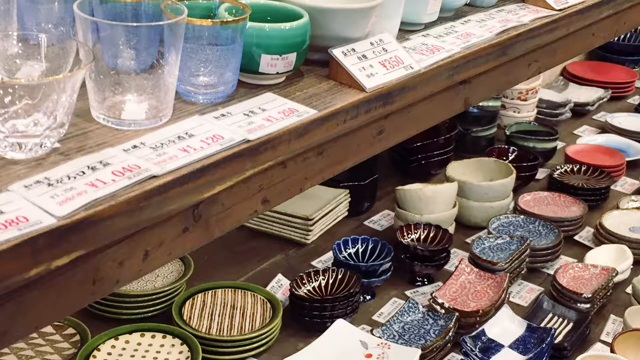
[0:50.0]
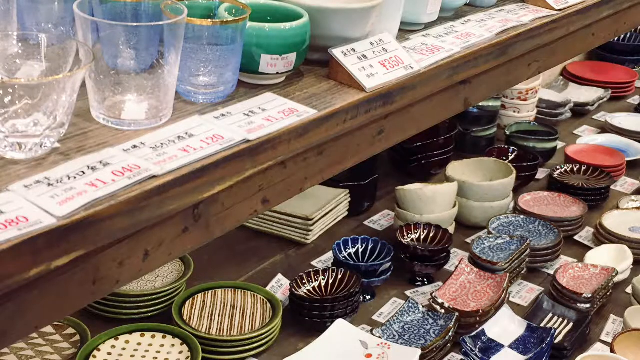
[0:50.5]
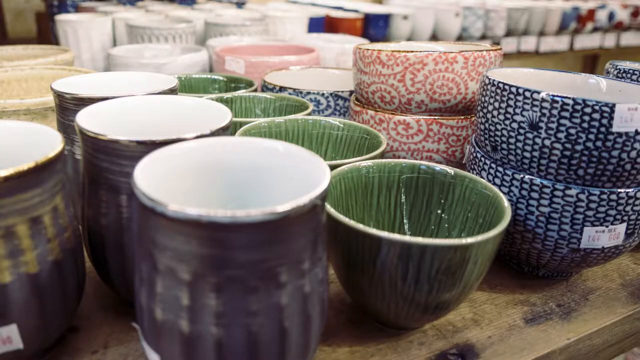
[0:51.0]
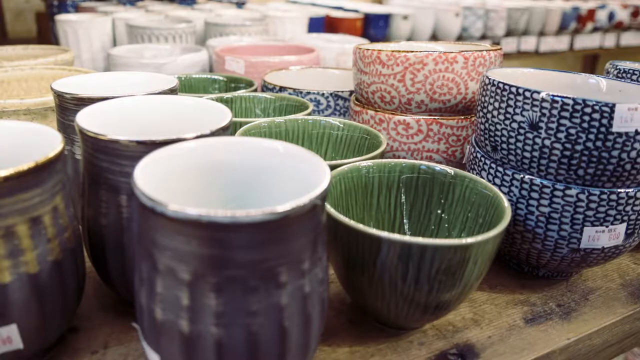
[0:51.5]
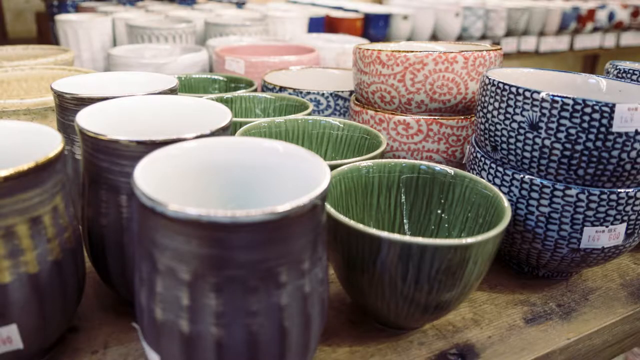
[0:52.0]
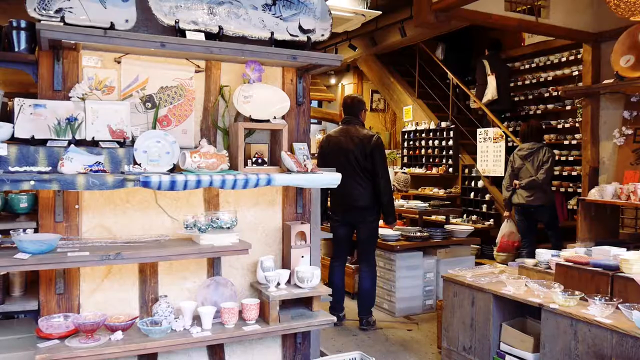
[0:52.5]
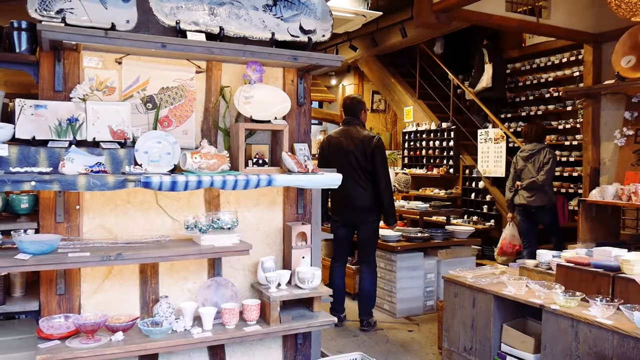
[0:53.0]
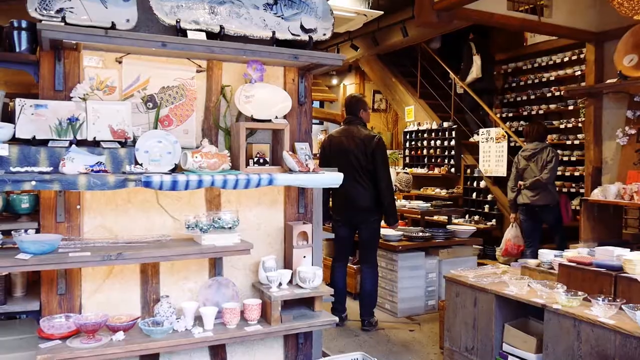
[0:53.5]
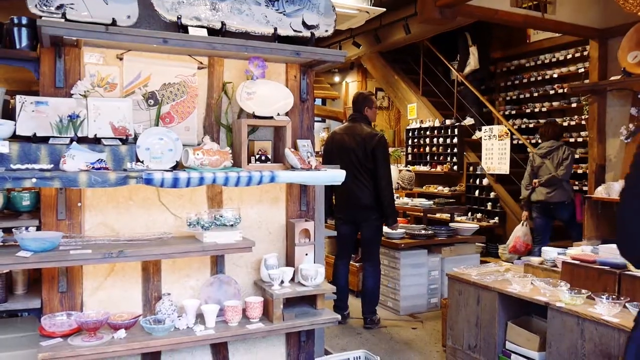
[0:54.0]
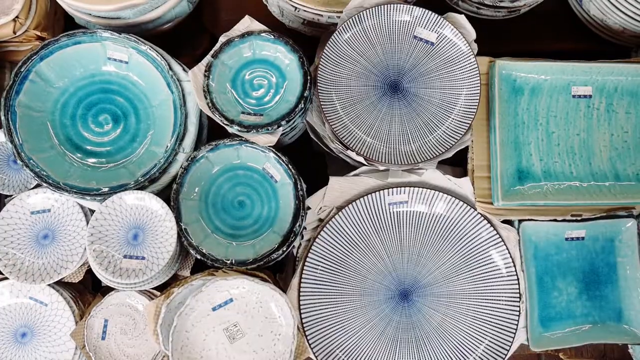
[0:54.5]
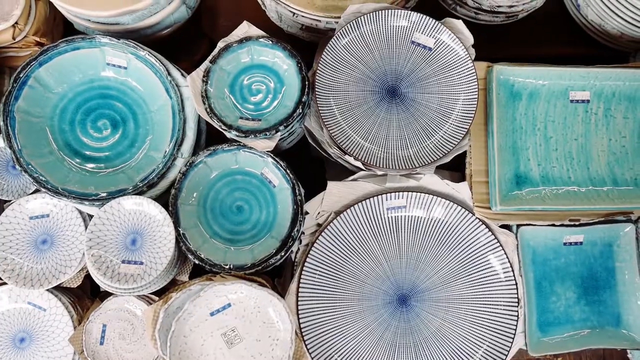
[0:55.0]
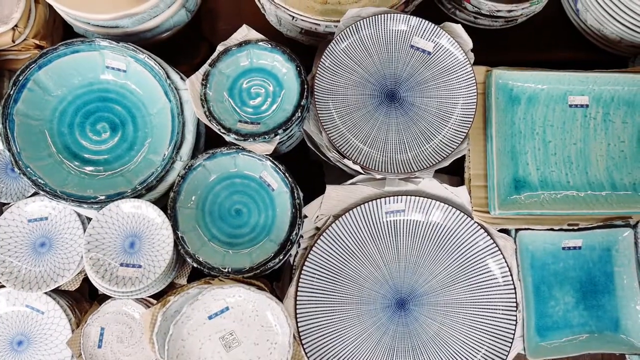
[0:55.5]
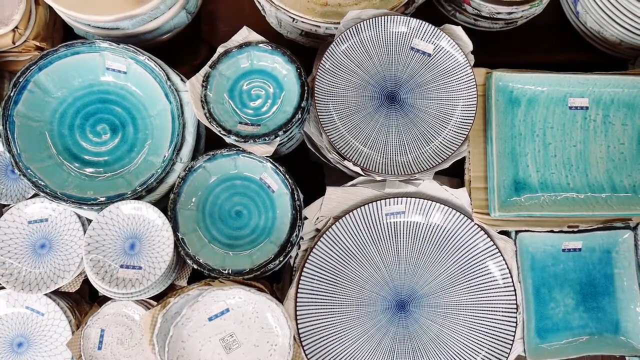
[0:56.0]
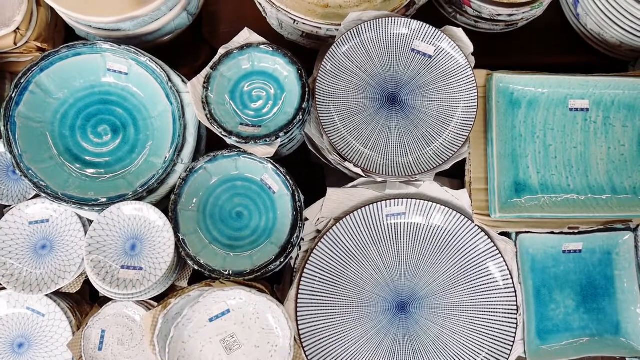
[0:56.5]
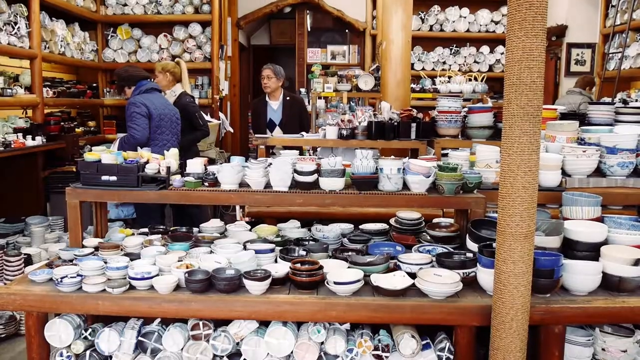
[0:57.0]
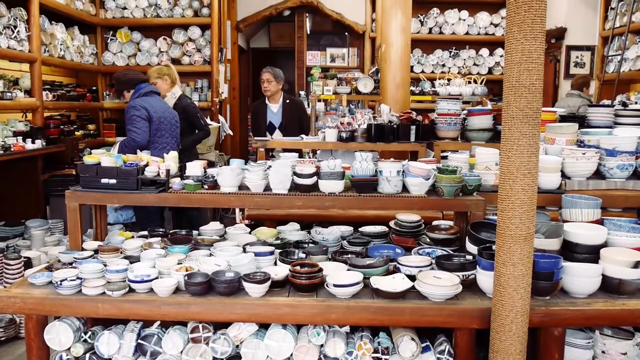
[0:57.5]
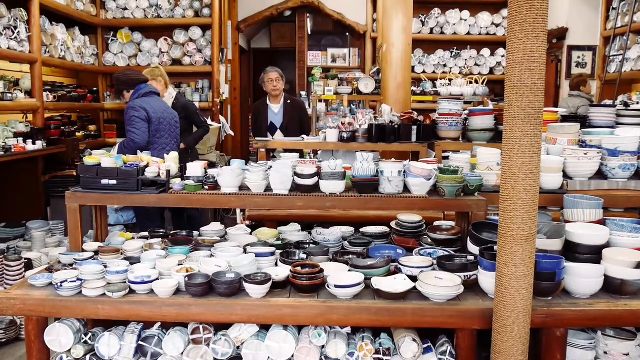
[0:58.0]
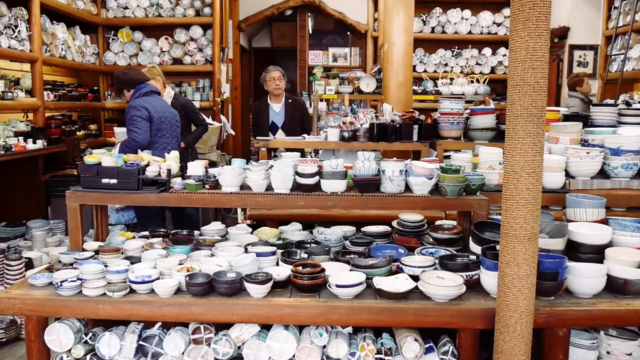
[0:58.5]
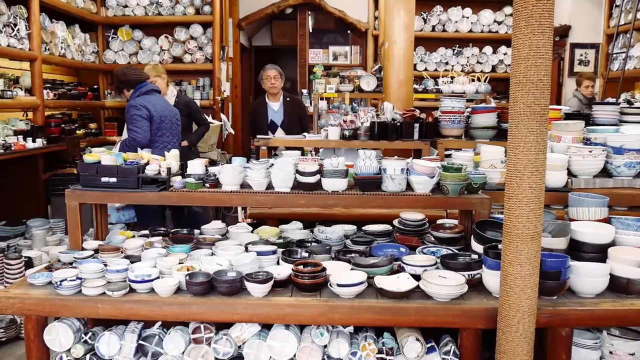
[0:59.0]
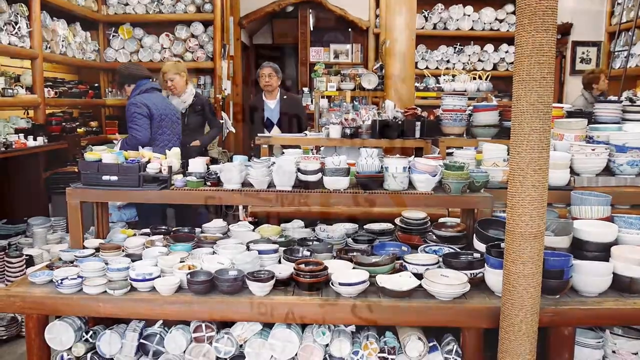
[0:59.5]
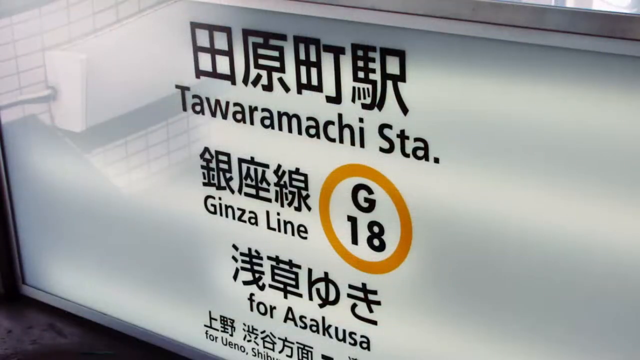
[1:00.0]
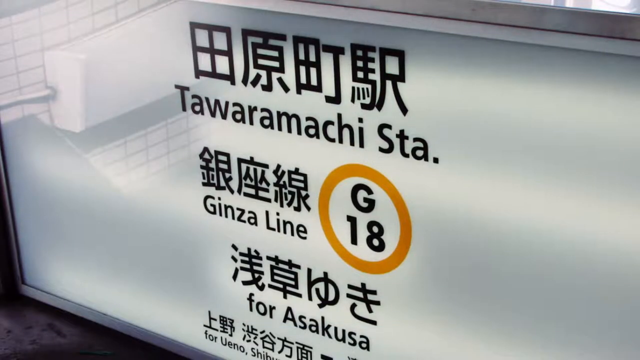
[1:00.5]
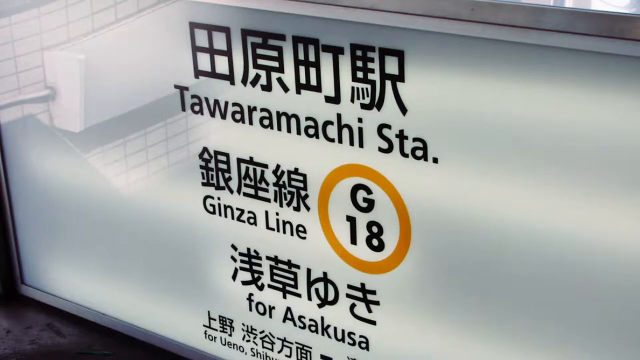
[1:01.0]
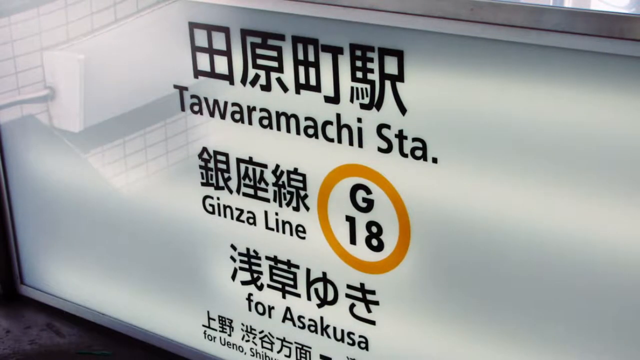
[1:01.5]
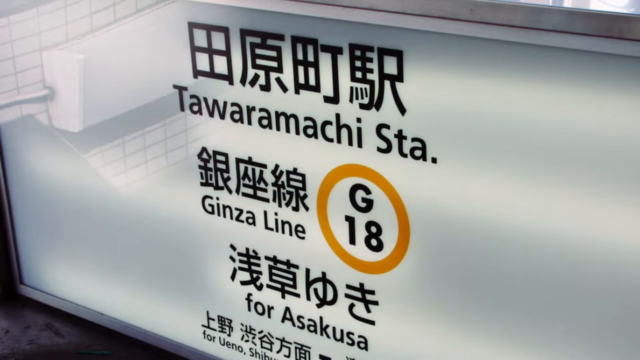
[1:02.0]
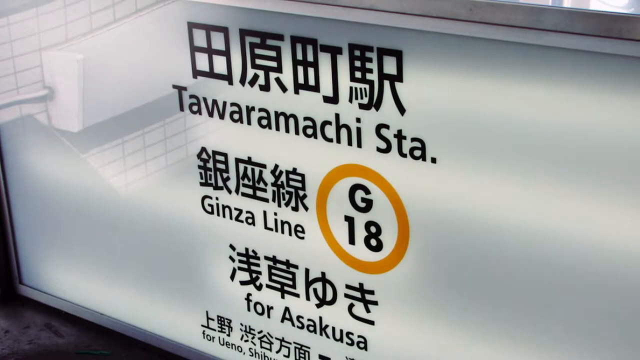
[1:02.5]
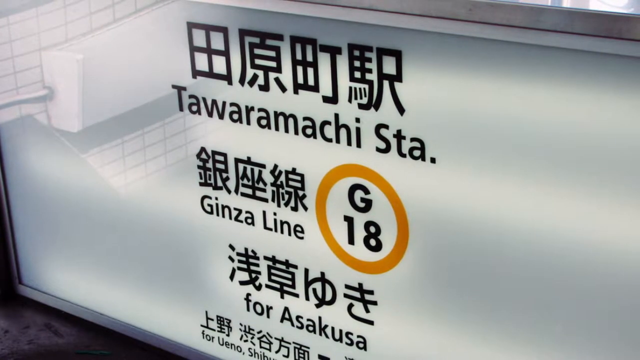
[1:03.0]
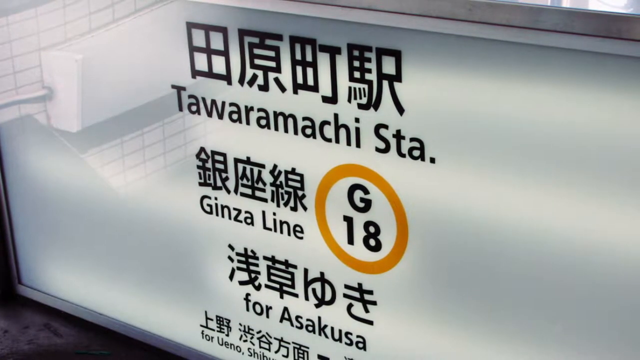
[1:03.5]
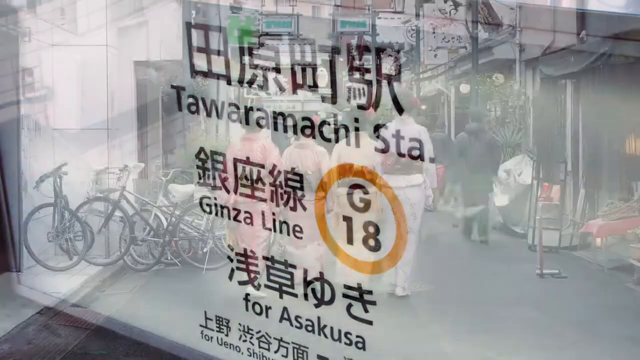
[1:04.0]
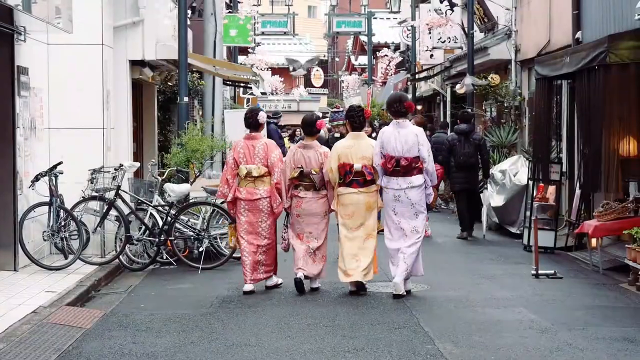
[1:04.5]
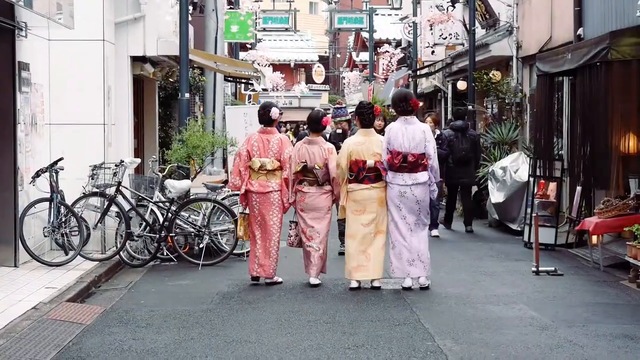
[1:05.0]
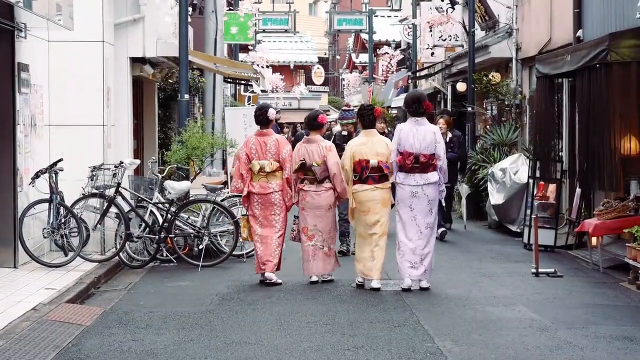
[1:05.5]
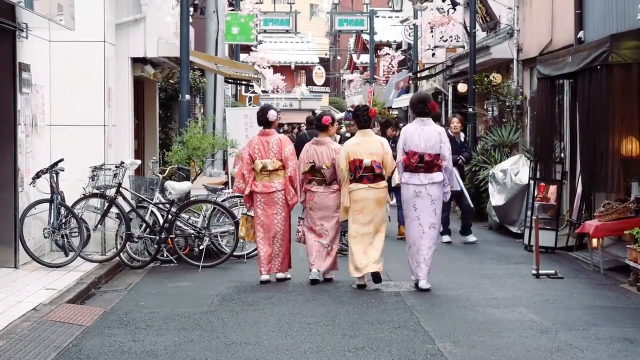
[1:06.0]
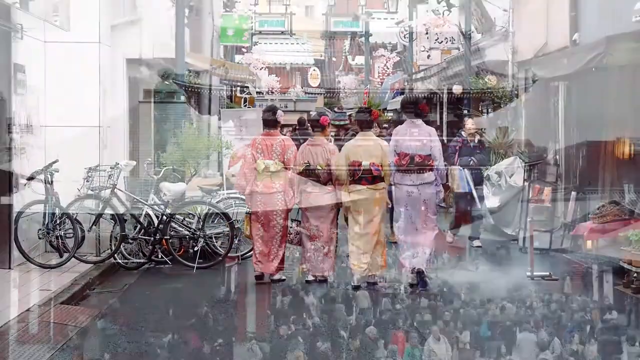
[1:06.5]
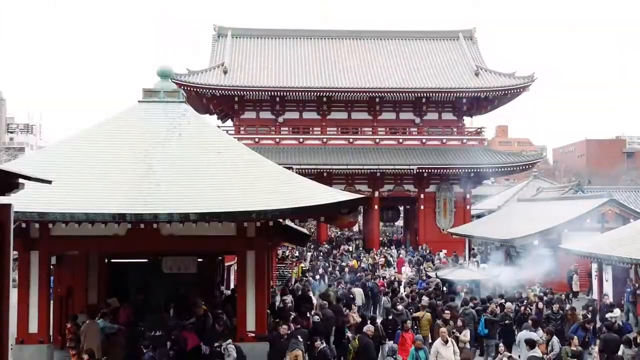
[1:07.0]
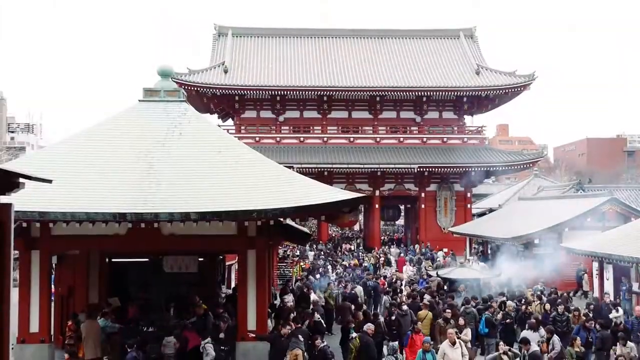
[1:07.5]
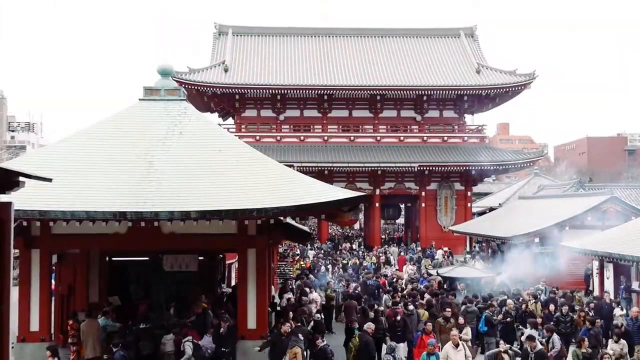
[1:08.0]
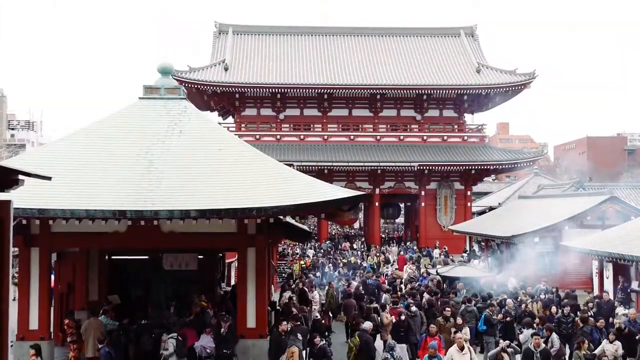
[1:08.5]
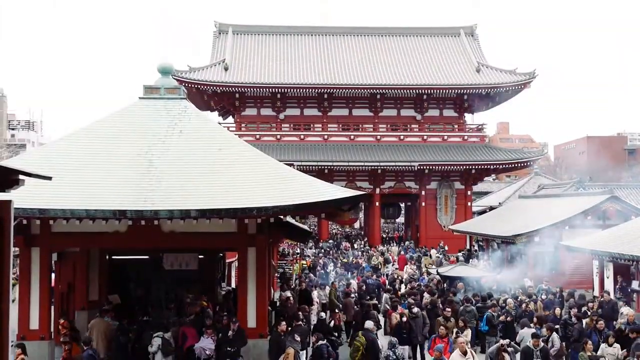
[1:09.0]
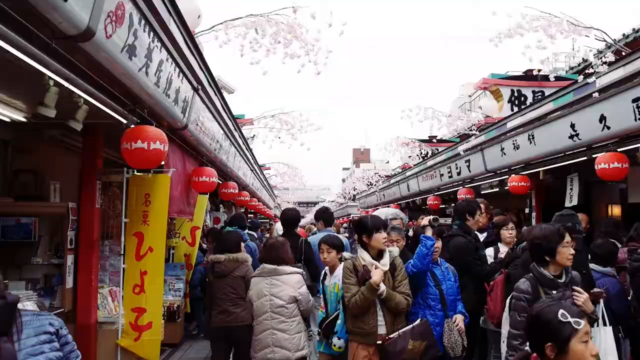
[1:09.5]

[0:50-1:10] Accessories and food items are still on display, including glass items. Pots in different colors, white, red, pink, purple, blue and green, are on tables and on a shelf; some are made of marble and others of glass, in various mixed colors. Two people go upstairs. Another woman watches a display, and a man looks at the display. There is a display of dishes, cups, bowls and pots, with pots of various colors and plates. Three women shop for house accessories, all pots, dishes and cups. Text reading "tawara machi" appears. Then three or four Japanese women walk on the street in traditional Japanese attire, with bicycles parked near them and other people walking. A Japanese house, or a structure that looks Japanese, has smoke coming out, as if something is being cooked. The street is full of people.